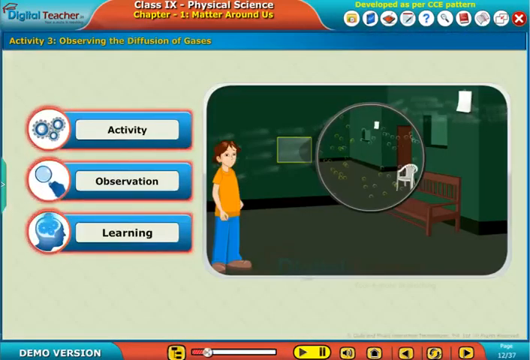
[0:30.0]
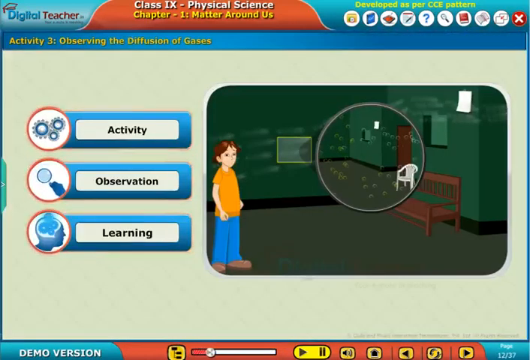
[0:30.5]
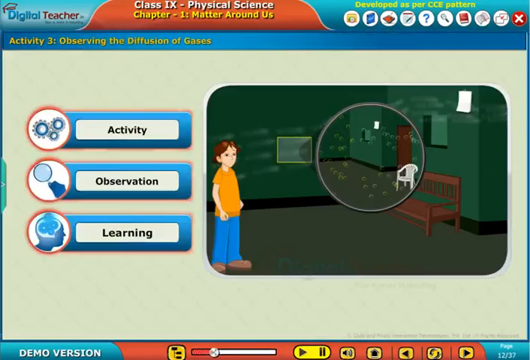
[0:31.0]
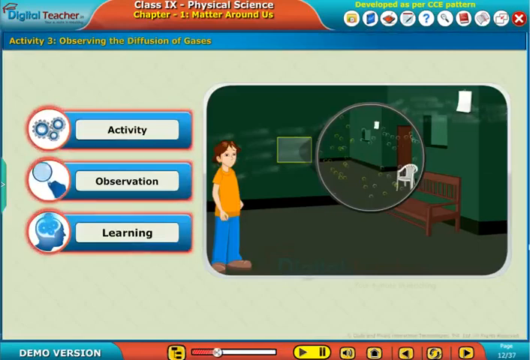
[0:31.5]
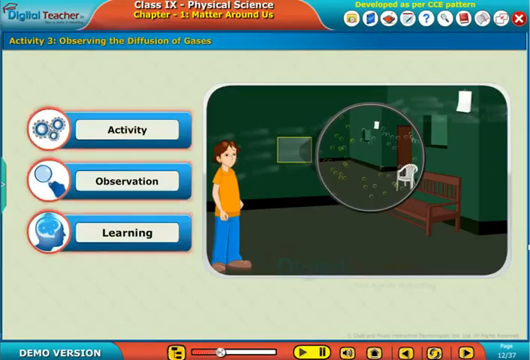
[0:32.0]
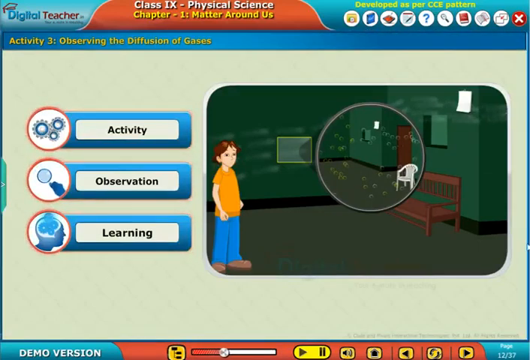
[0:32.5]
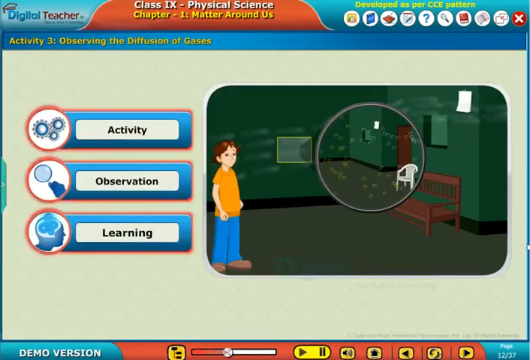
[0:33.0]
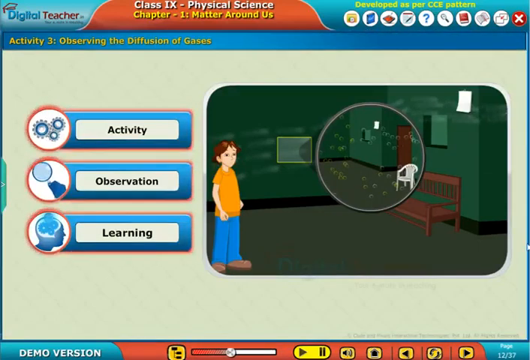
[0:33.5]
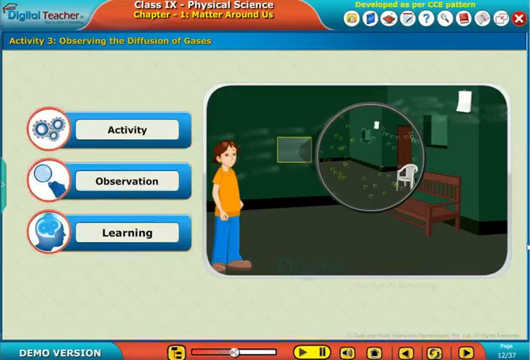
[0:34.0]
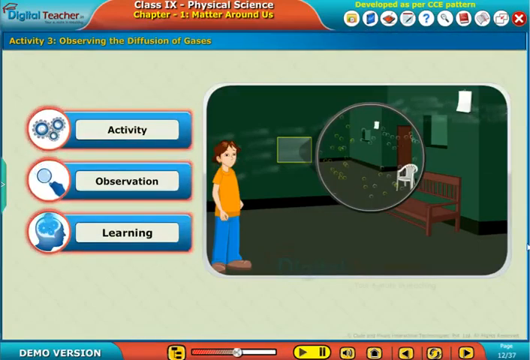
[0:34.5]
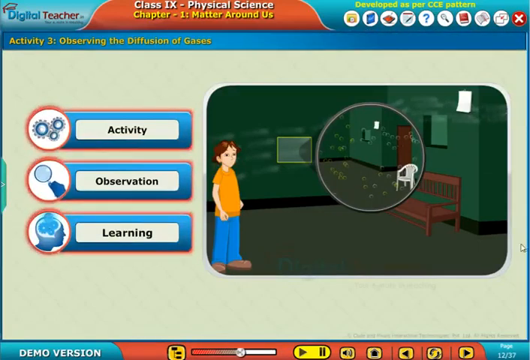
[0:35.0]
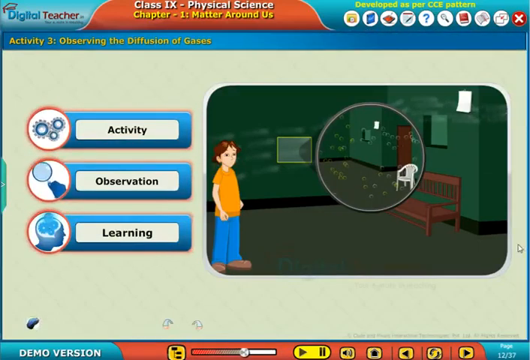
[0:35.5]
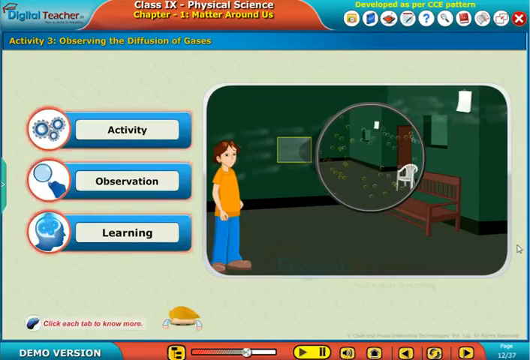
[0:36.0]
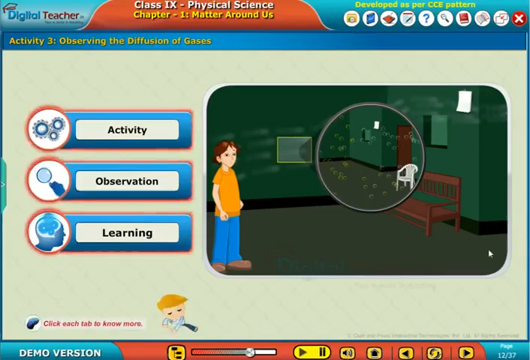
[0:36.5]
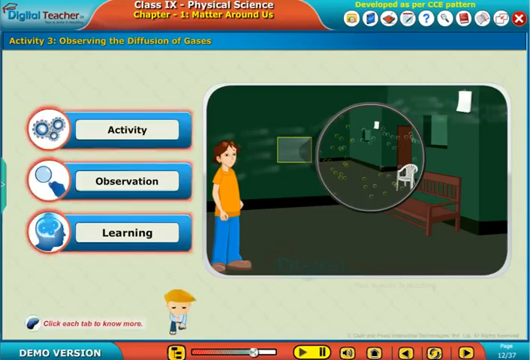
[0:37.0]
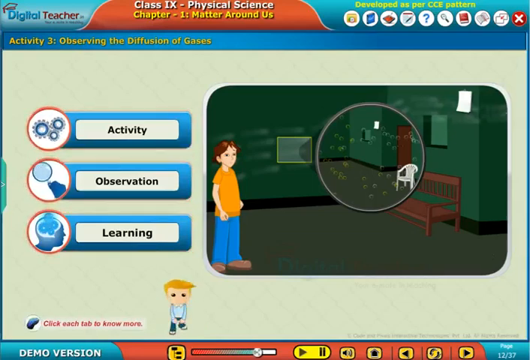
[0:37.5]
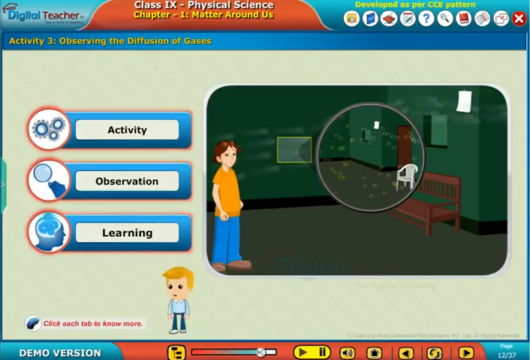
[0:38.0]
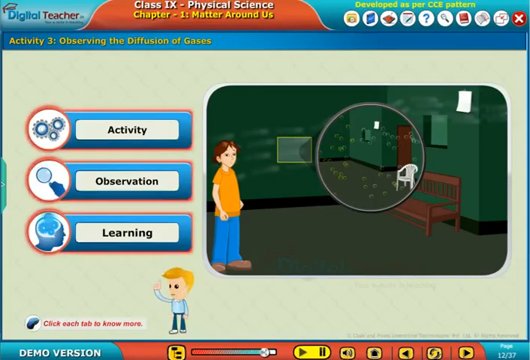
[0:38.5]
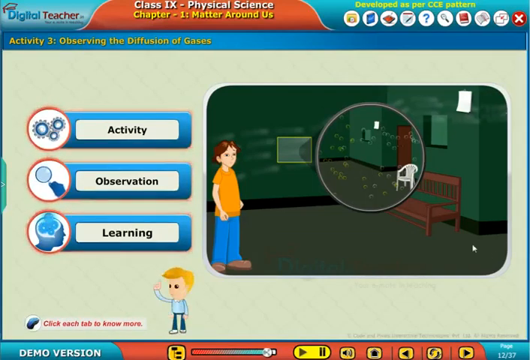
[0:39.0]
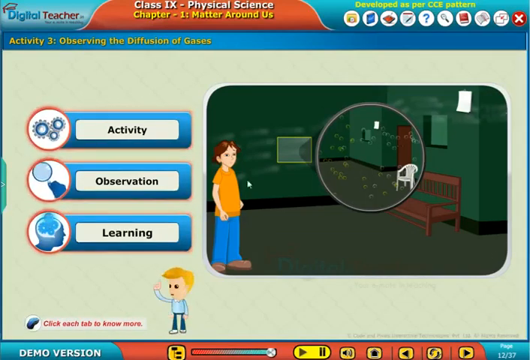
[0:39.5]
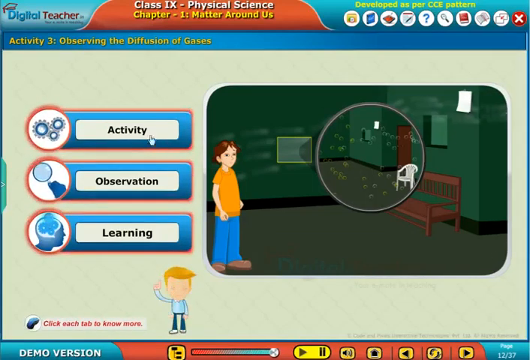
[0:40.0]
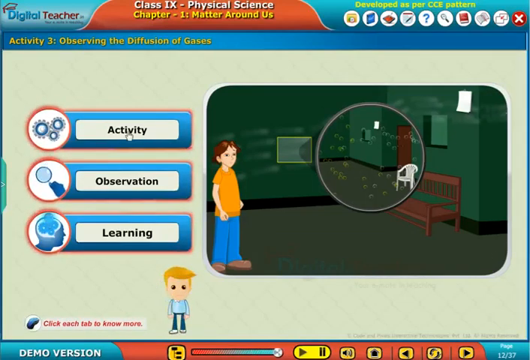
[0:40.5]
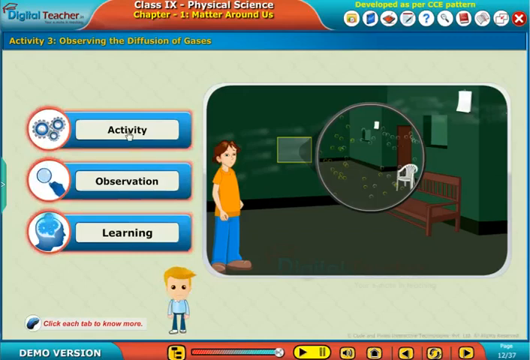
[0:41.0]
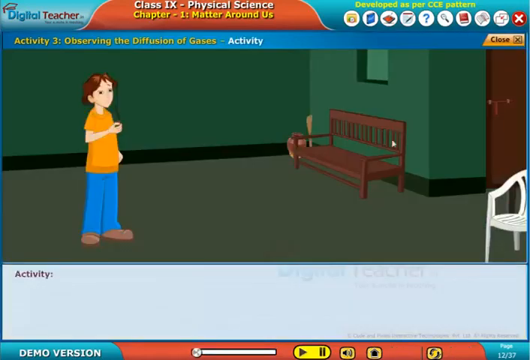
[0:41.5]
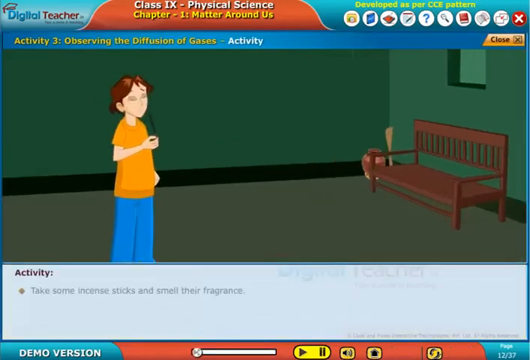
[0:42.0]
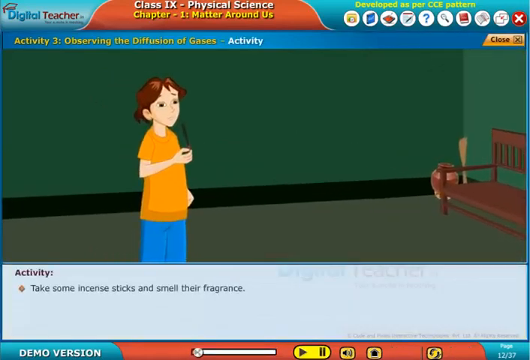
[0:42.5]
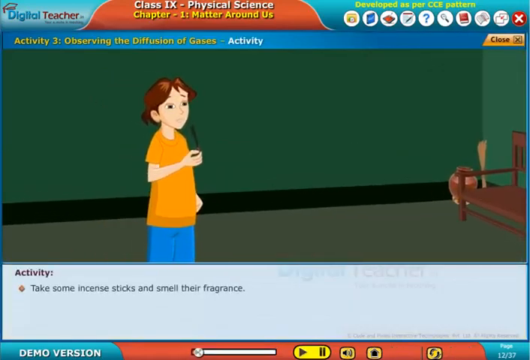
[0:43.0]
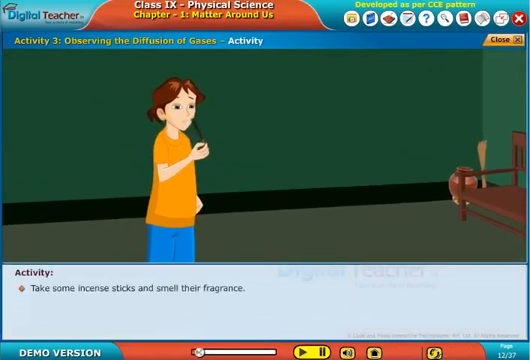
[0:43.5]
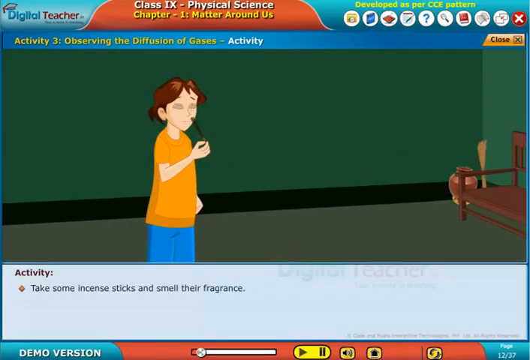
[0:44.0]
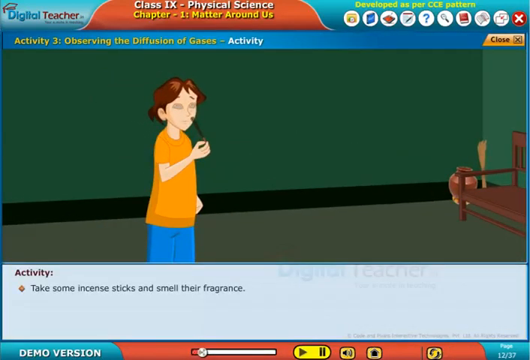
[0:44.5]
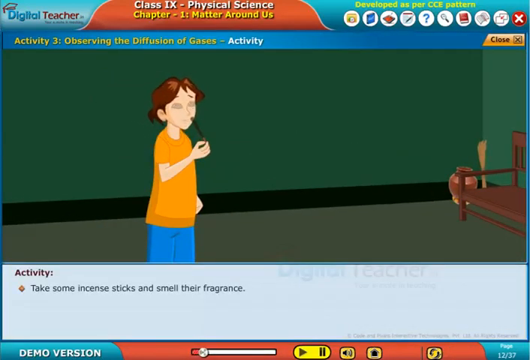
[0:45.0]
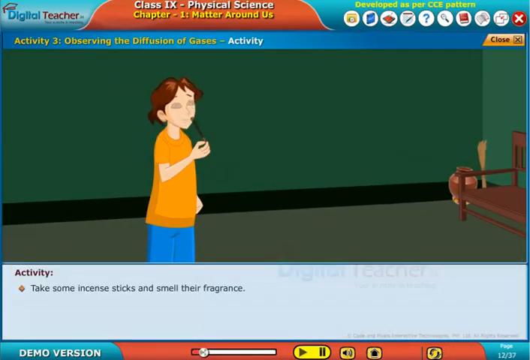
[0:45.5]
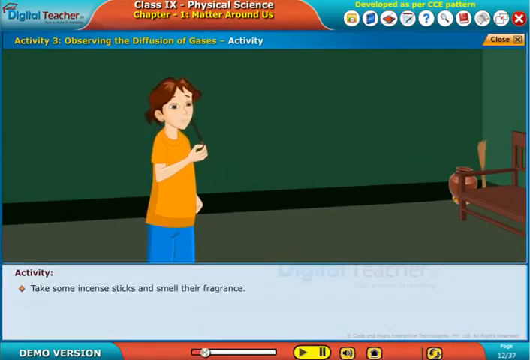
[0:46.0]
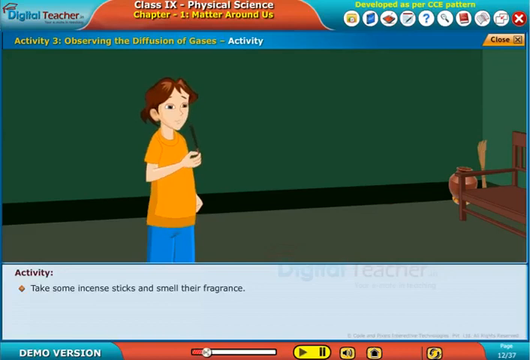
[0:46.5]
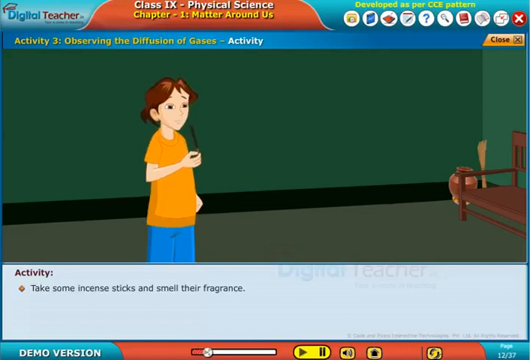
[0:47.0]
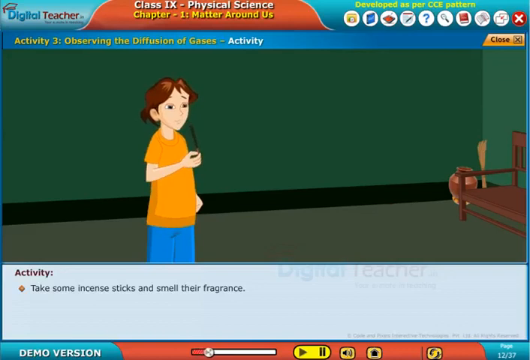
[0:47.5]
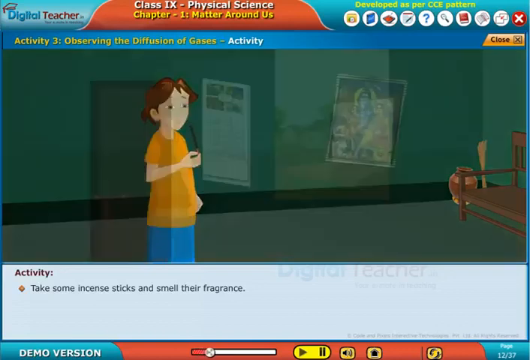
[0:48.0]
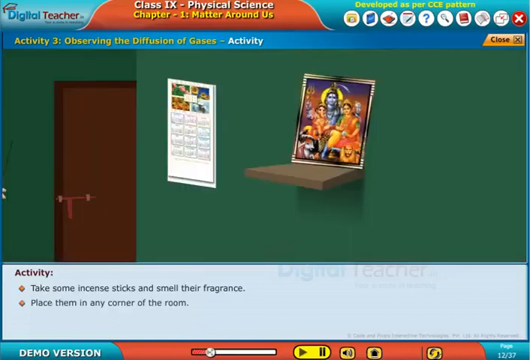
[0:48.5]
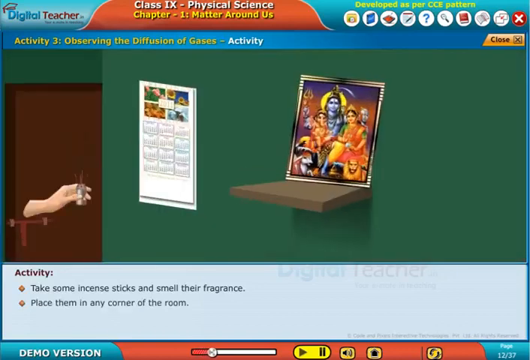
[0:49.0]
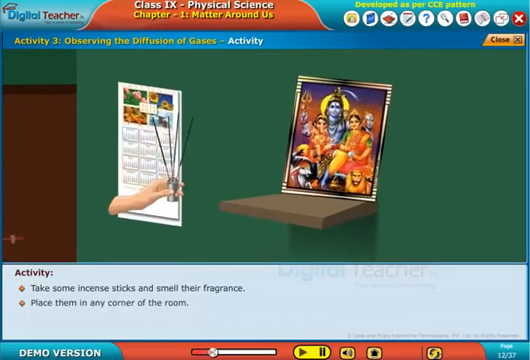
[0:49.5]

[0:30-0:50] The screen shows "activity three, observing the diffusion of gases." In the top corner is written "digital teacher" and physical science. On the left side are three captions, one reading "activity" and another "observation." A person stands right in the centre wearing an orange top, blue pants and brown shoes. On the far right are a white chair and a brown bench. A paper hangs on the wall, and there is a frame on the wall. Right in the centre, close to the bench, is a circle containing what appear to be bubbles. The room is all green, painted black at the bottom, and the floor is also green. At the bottom a person with orange hair appears. The standing person sniffs at something that looks like a stick.